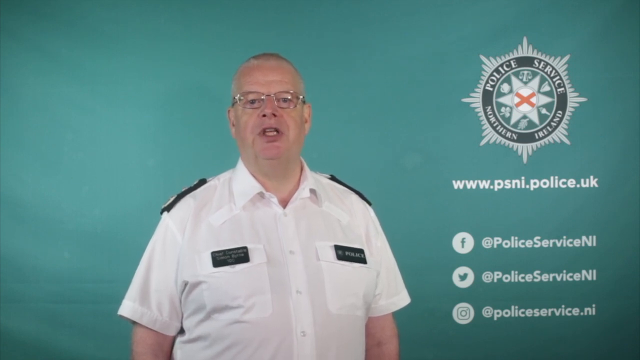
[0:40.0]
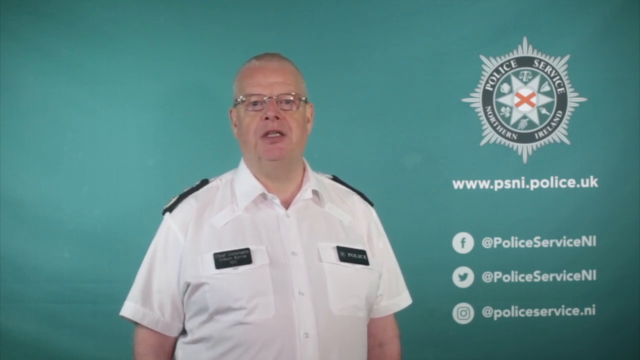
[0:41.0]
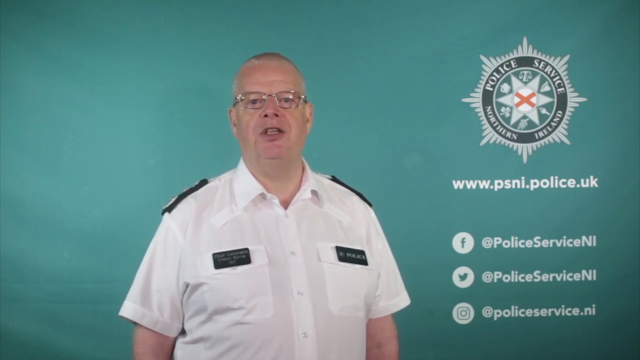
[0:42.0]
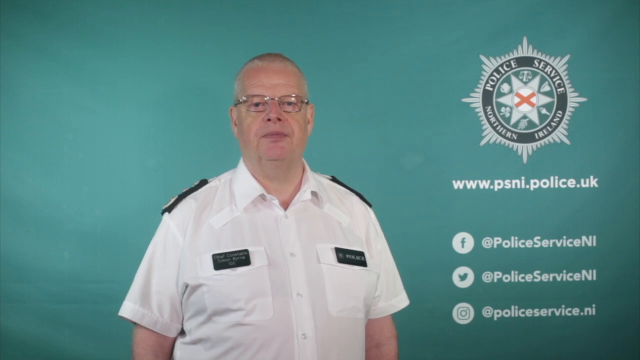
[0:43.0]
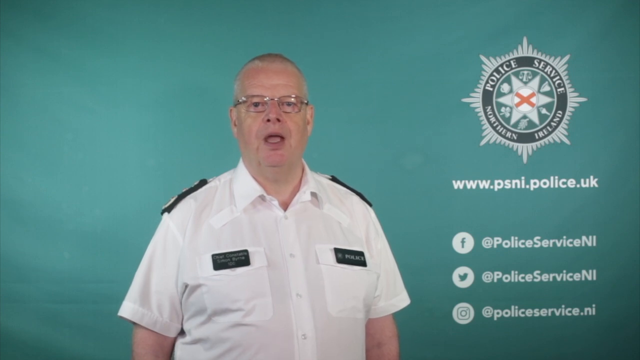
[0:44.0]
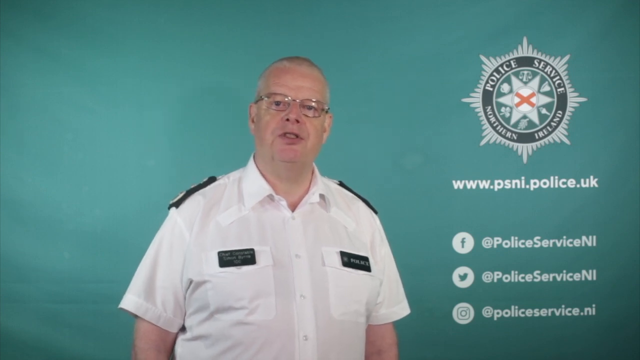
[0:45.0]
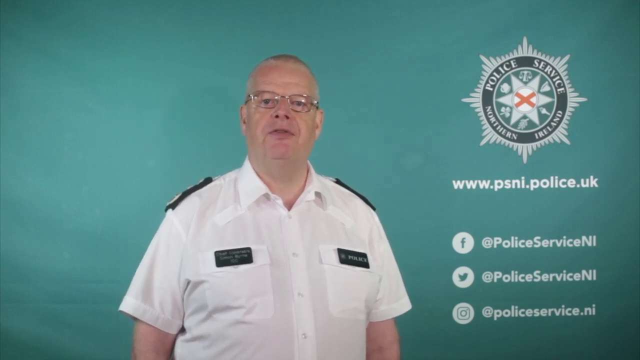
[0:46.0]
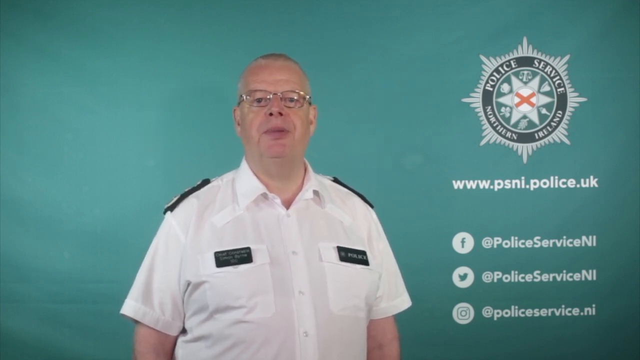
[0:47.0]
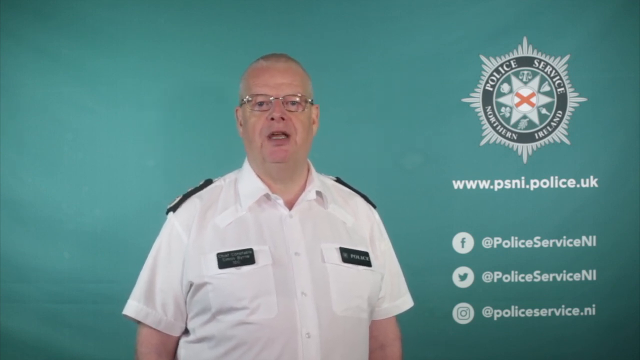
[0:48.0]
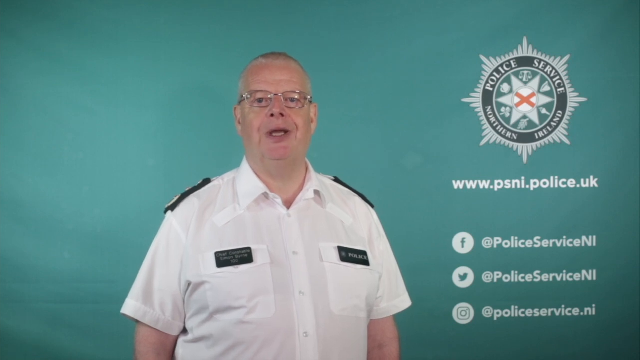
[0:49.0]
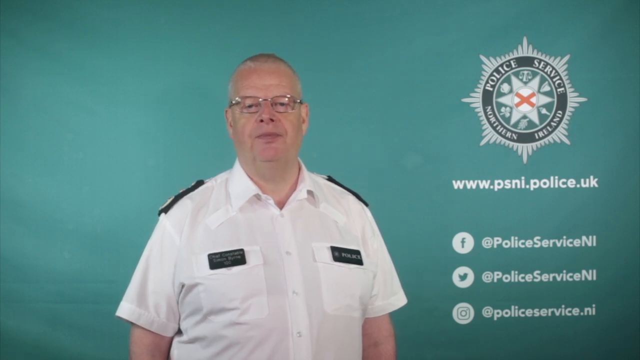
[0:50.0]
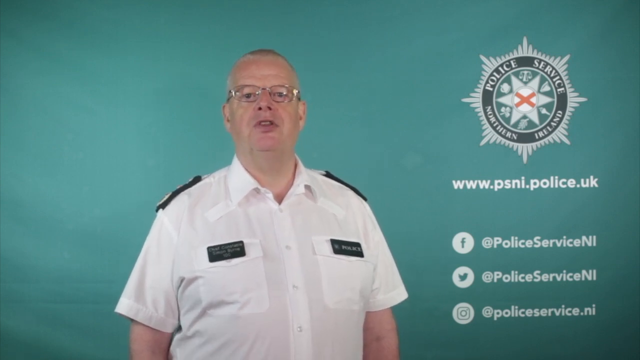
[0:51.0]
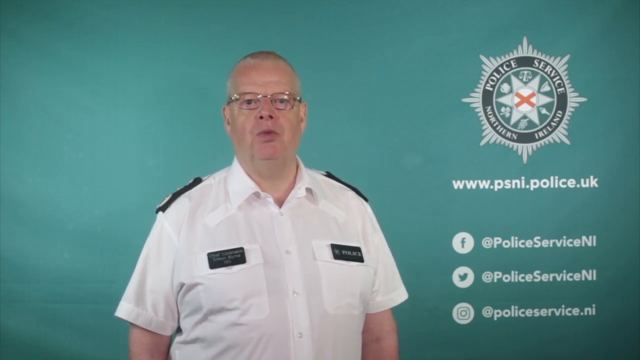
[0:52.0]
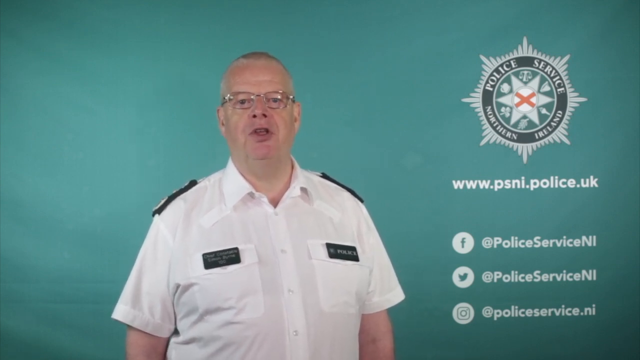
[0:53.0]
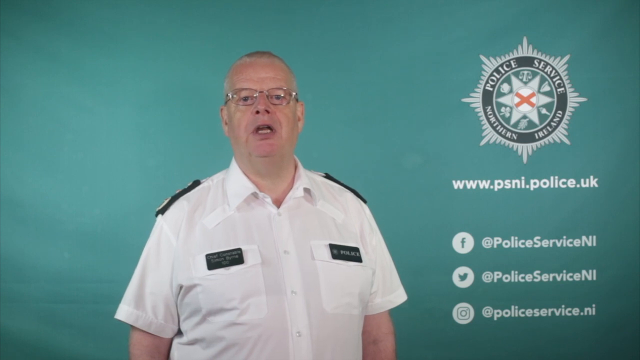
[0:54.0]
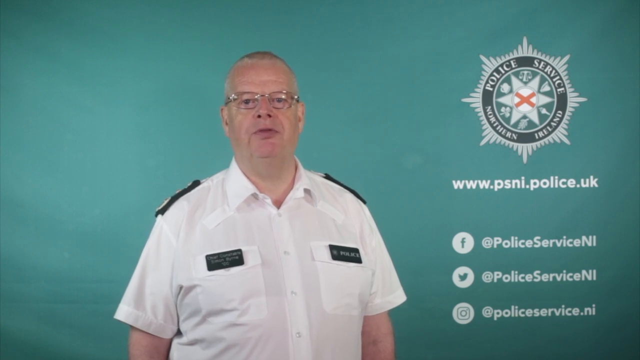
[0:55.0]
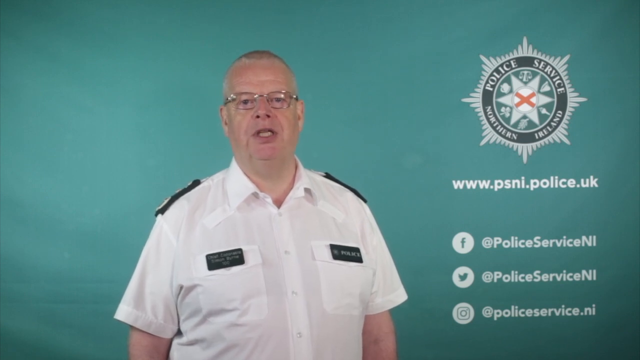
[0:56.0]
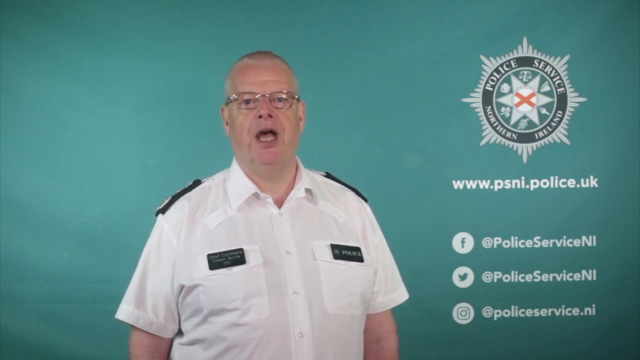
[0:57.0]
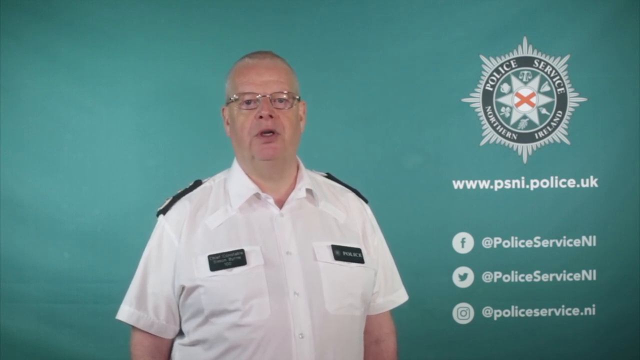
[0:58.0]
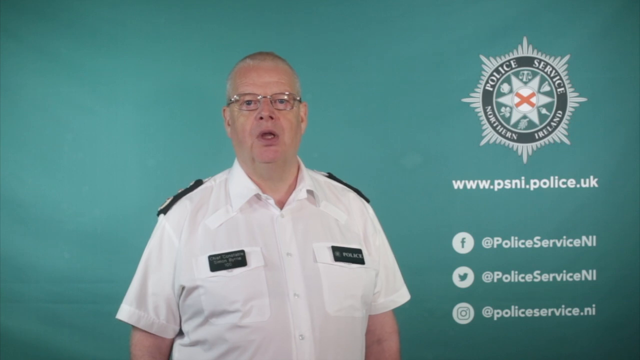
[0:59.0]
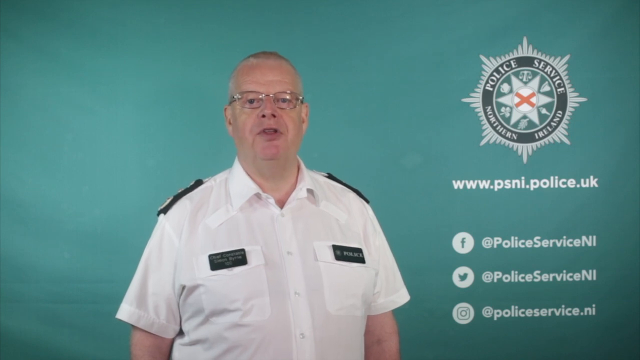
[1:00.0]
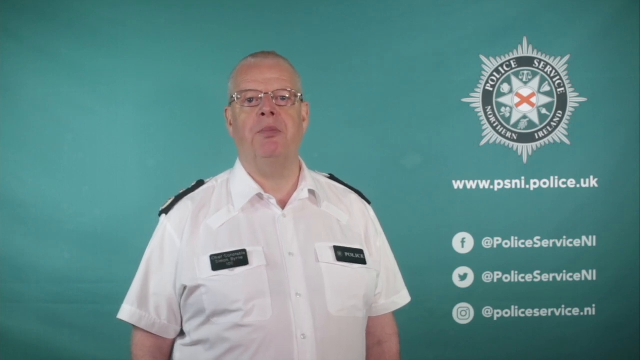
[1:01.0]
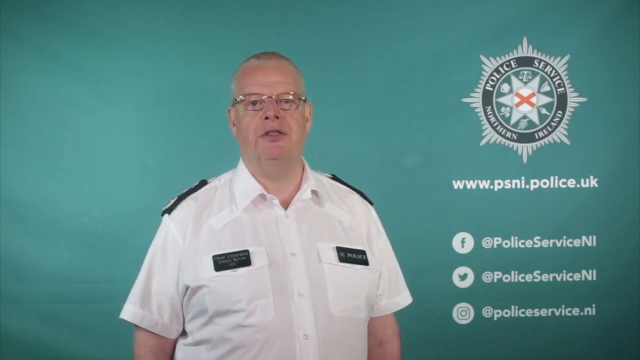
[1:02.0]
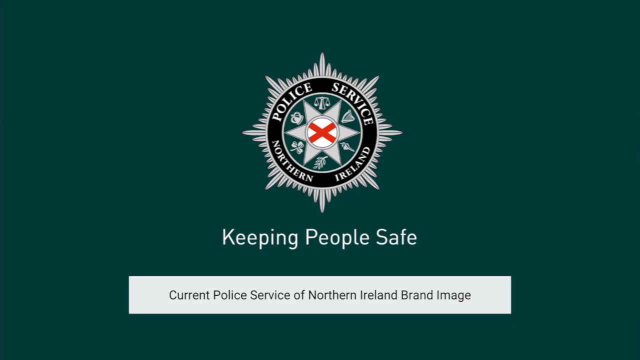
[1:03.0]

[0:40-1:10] The man in the white shirt continues talking to the camera in front of the bluish-green background, with the insignia in the top right. His body movement is slightly more pronounced: he shakes a little from side to side and his head movements are more pronounced. The website URL and social media handles are on the right side of the screen. The man is then replaced by a darker green background with the Police Service of Northern Ireland insignia and a heading that says "Keeping people safe". Beneath it is a footer that says "Current Police Service of Northern Ireland brand image", set in a white box laid over the green background with green text inside.